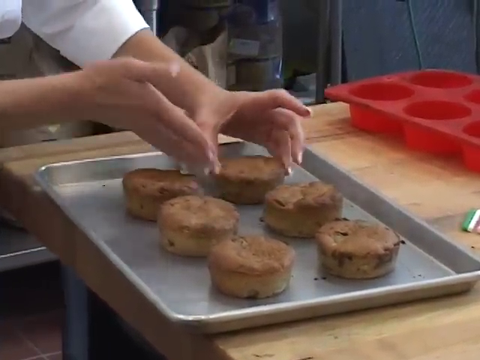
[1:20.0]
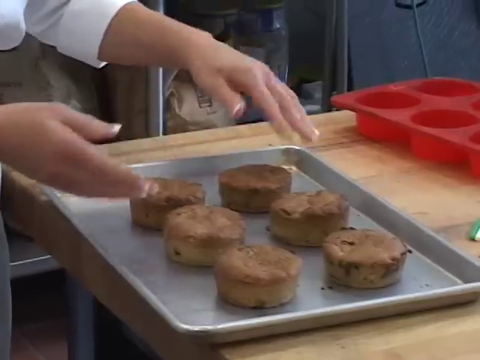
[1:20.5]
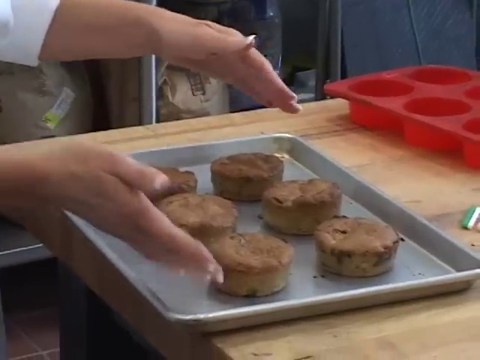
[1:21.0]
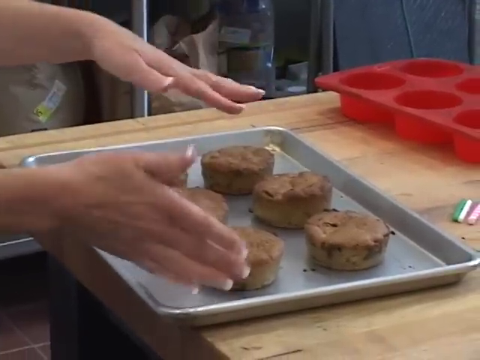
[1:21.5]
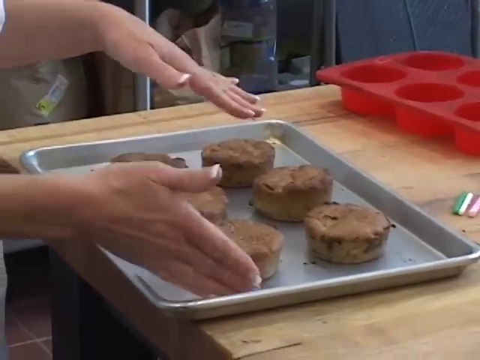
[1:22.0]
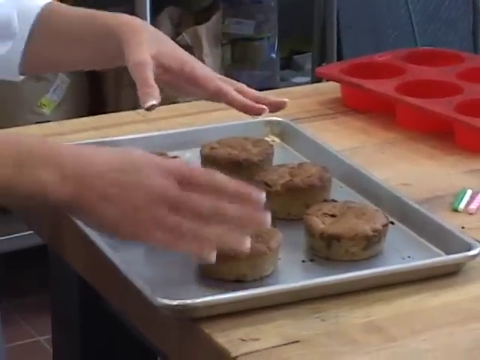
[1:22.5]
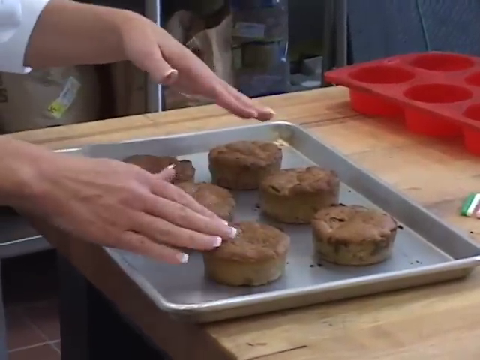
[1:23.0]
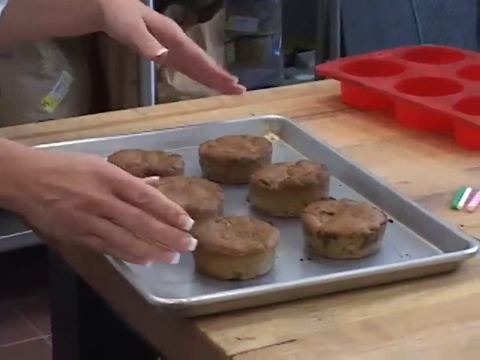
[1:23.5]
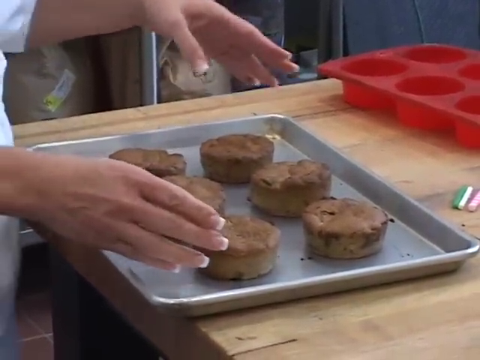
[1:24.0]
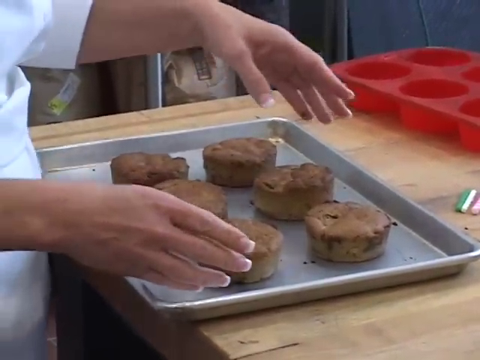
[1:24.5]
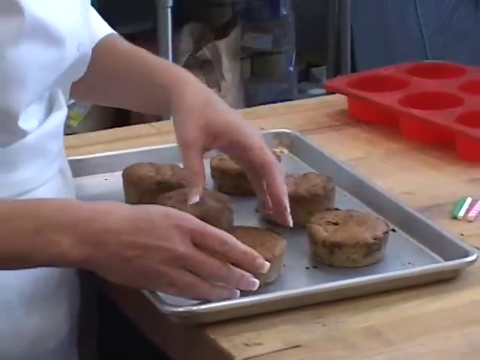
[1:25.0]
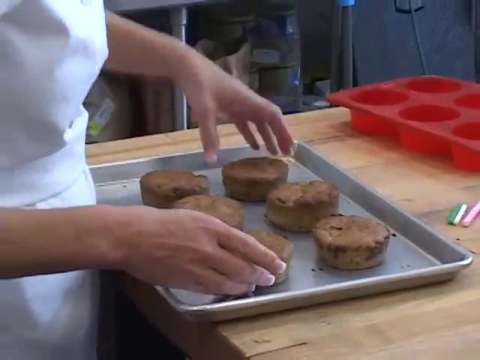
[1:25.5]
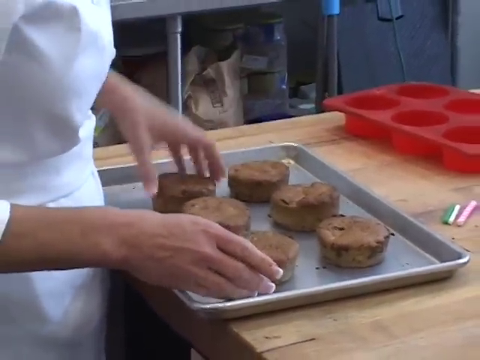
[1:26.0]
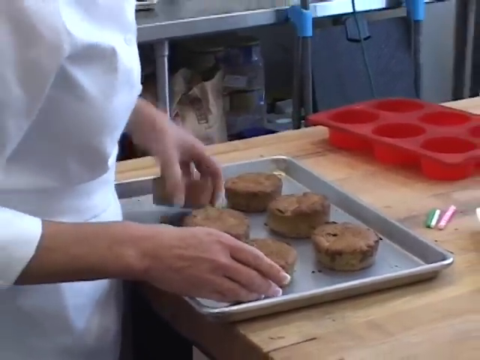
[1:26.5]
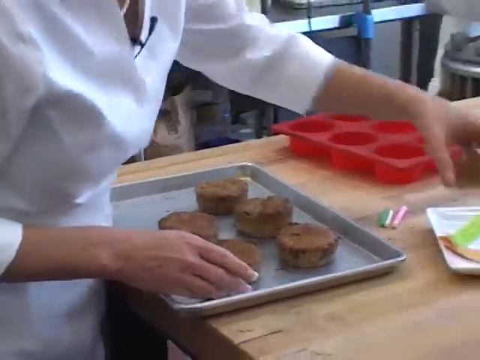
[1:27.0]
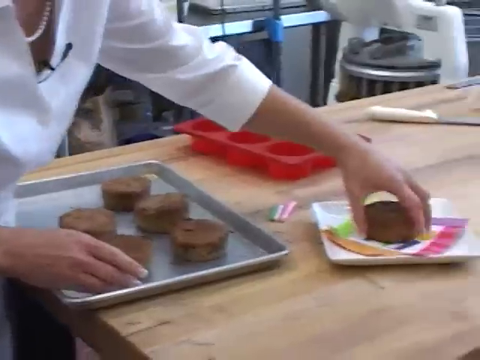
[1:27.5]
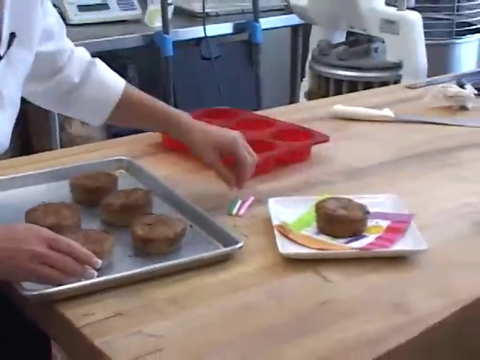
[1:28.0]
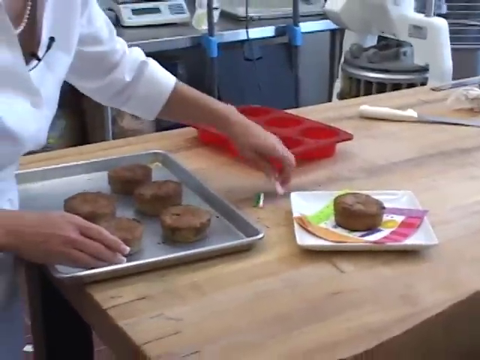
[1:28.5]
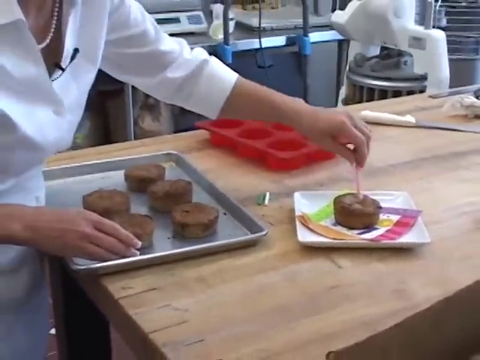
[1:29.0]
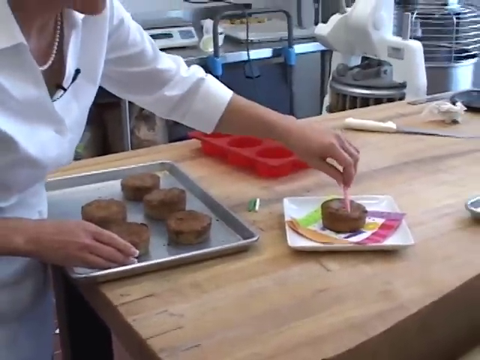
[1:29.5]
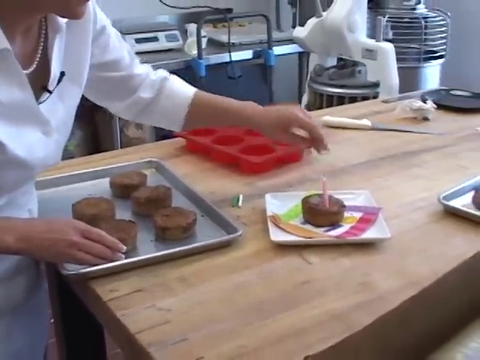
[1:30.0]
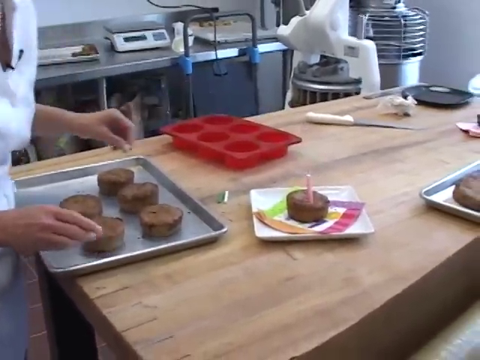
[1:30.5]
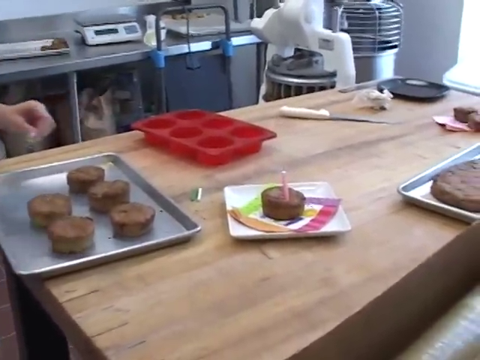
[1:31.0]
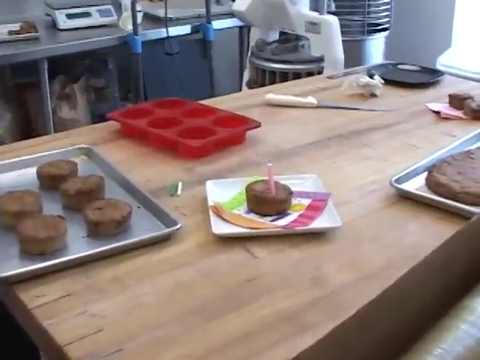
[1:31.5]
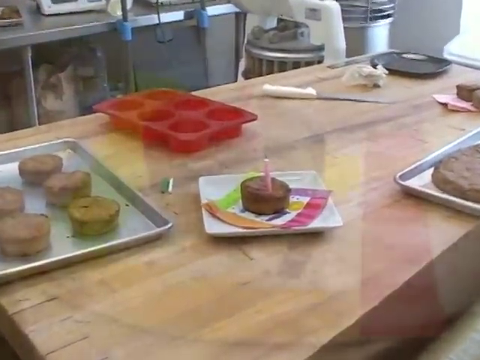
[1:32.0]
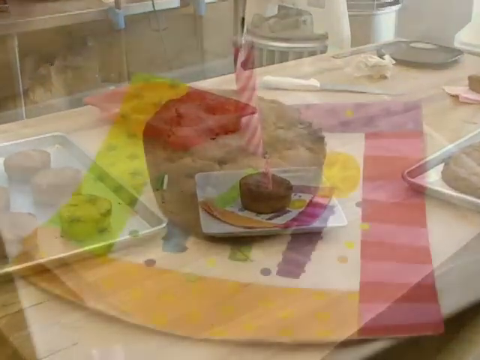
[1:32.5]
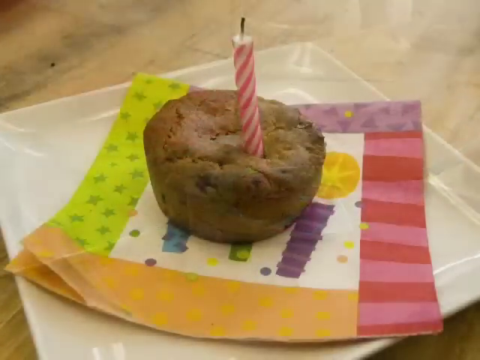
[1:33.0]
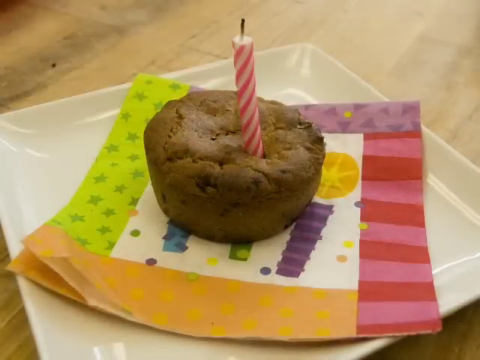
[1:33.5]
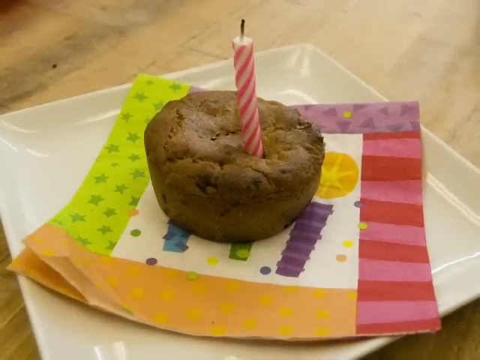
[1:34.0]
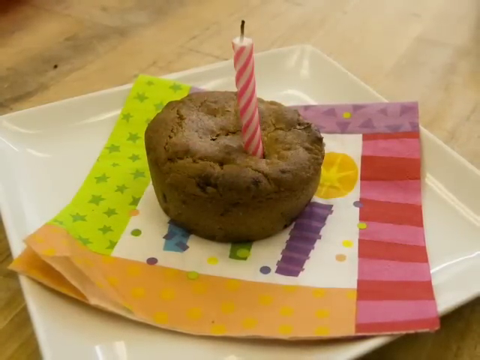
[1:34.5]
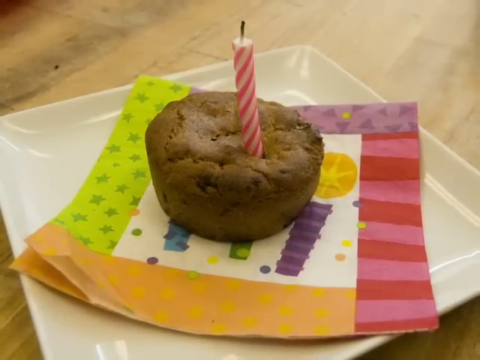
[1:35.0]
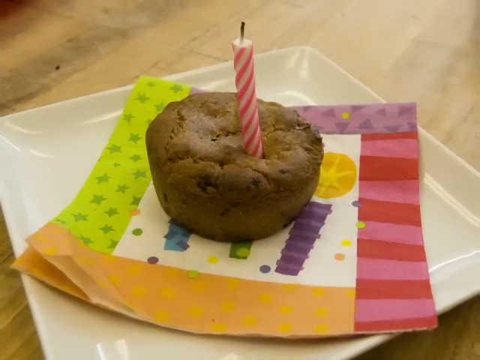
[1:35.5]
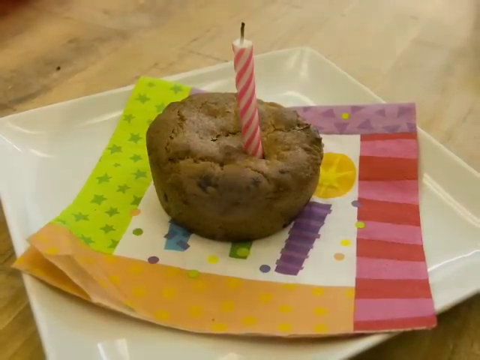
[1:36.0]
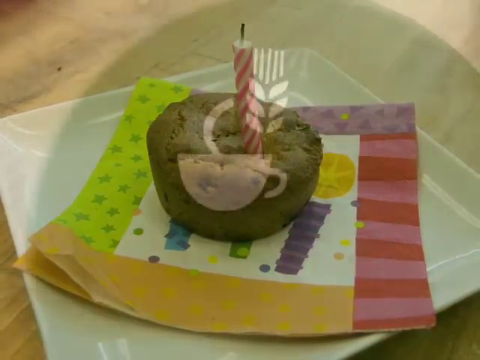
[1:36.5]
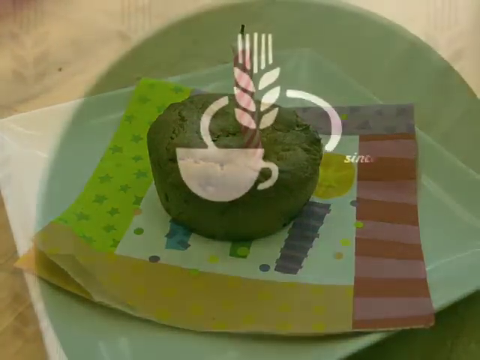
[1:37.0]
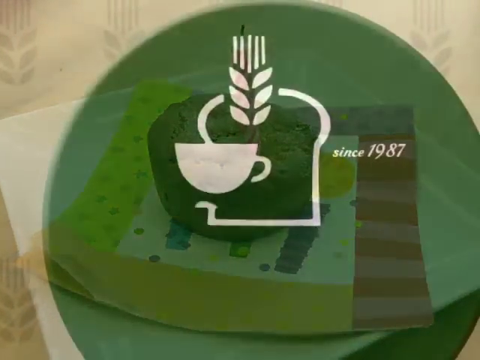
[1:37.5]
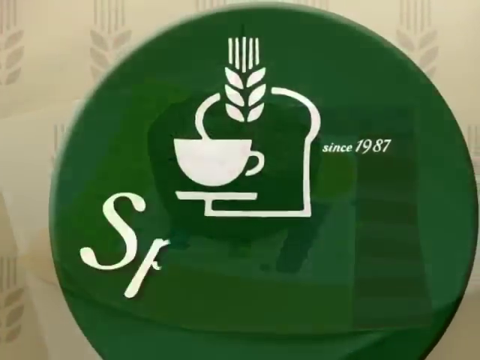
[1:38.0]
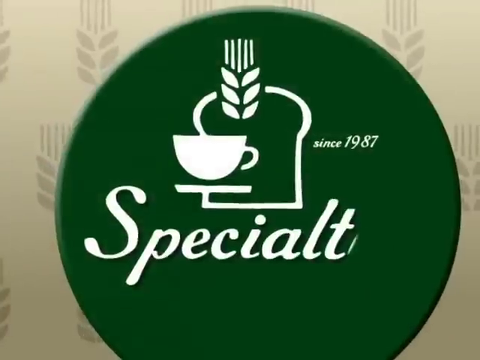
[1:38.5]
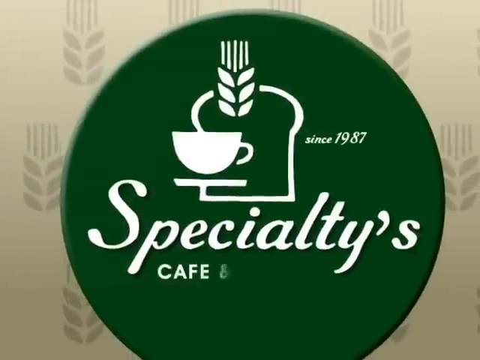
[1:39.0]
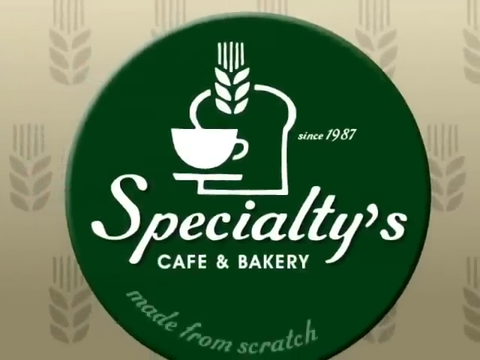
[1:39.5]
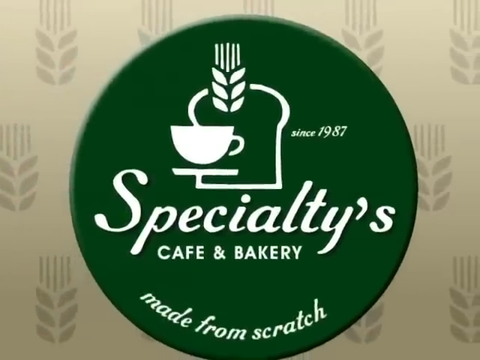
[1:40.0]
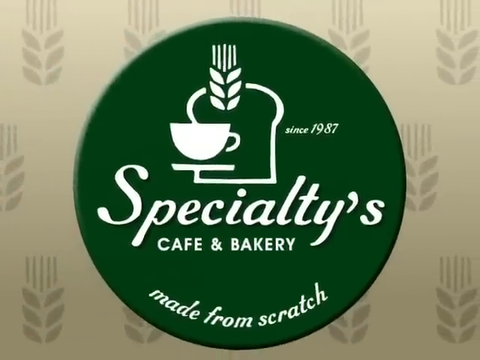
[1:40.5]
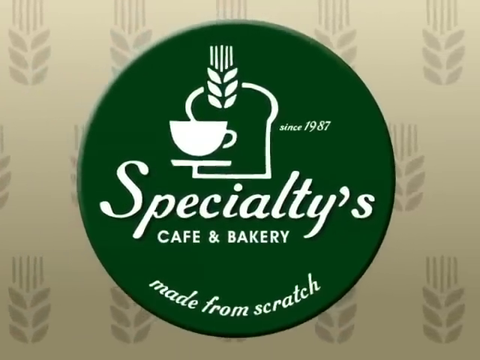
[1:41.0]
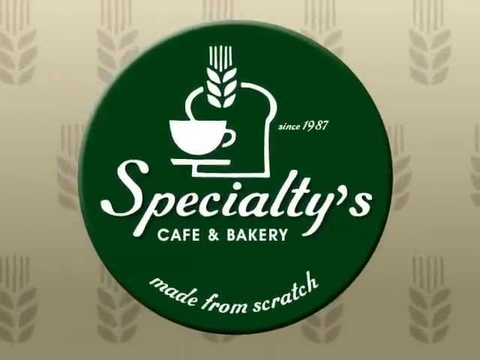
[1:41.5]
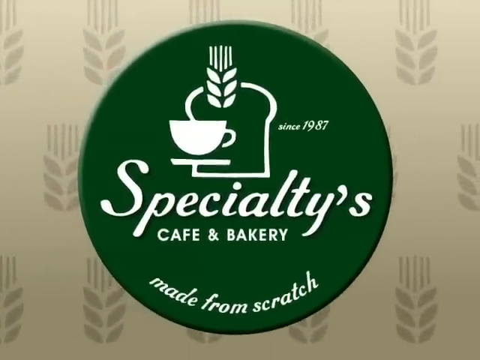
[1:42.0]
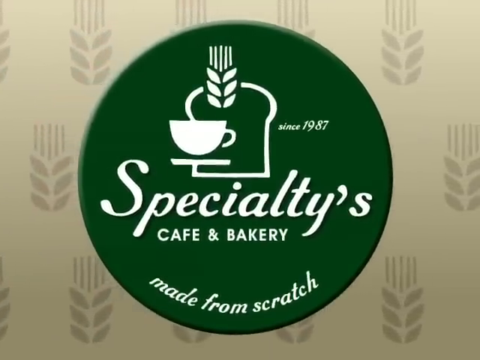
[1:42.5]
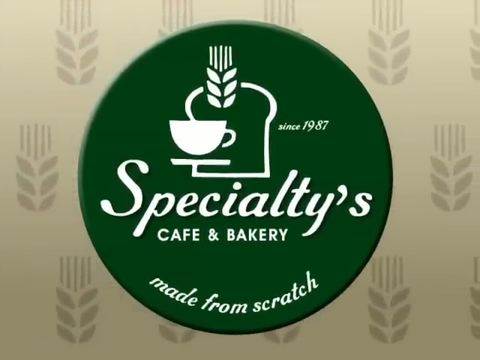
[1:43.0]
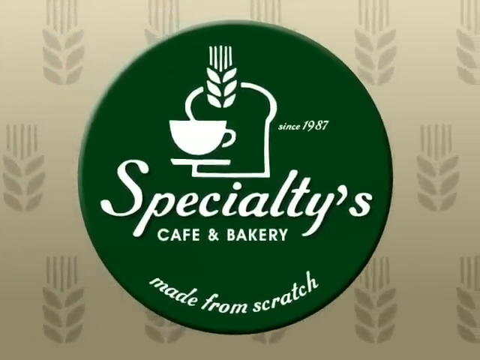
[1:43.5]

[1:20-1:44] The camera is zoomed in on the woman as she removes the cupcakes and turns them top side up, showing the thick golden brown crust on top. She does this slowly and gently so they do not lose their shape. She then places one on another plate with a candle on top of it, and a zoomed-in image shows the product facing up with the candle on top. It is on a white plate with paper towels of different colors. After that, the green logo from the beginning is shown again, apparently for the Specialities Cafe and Bakery.